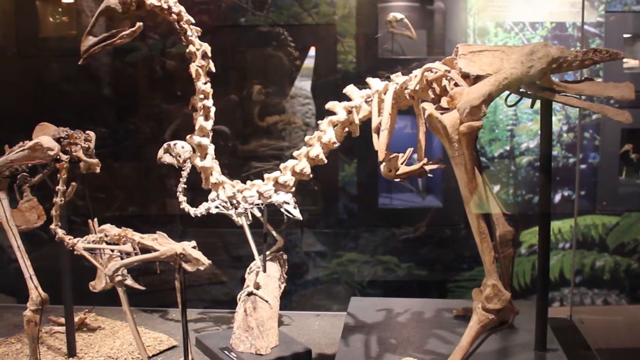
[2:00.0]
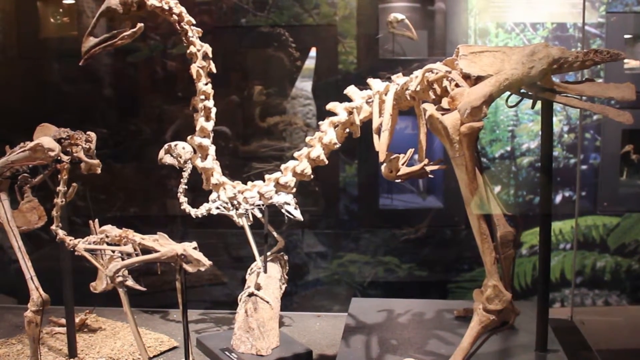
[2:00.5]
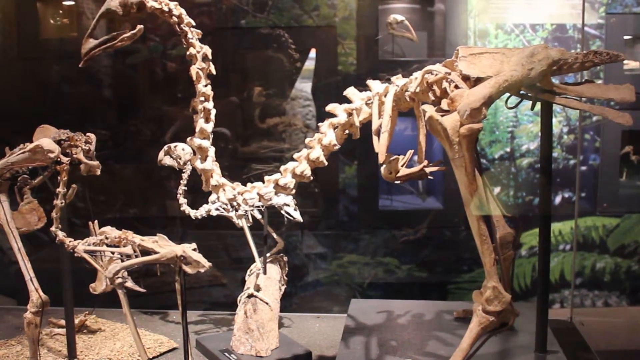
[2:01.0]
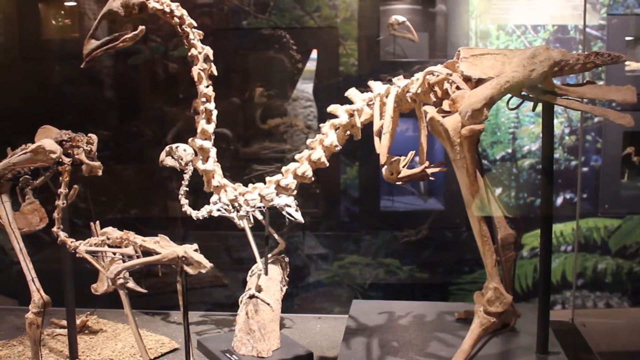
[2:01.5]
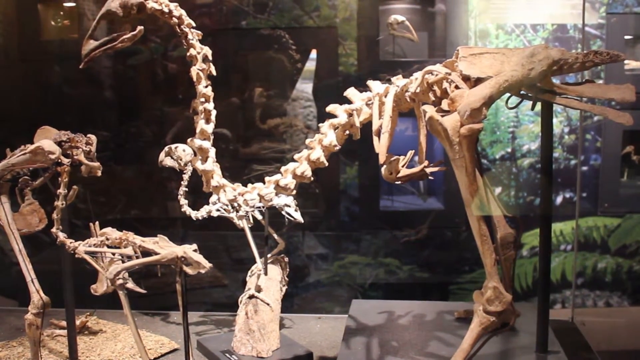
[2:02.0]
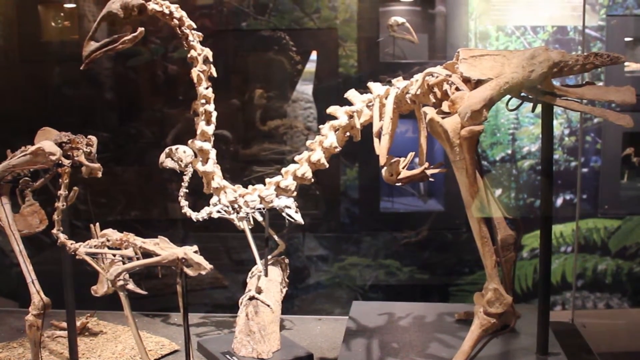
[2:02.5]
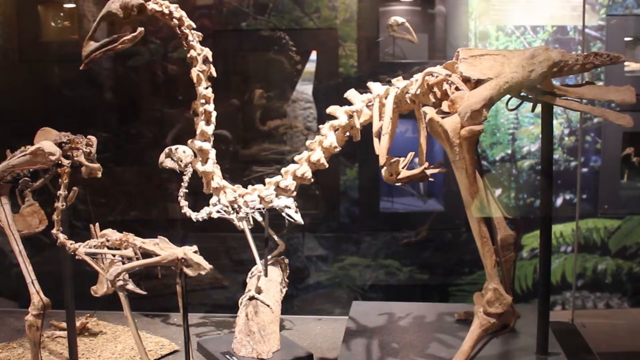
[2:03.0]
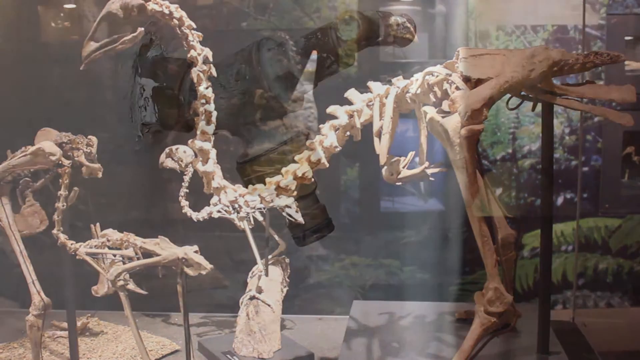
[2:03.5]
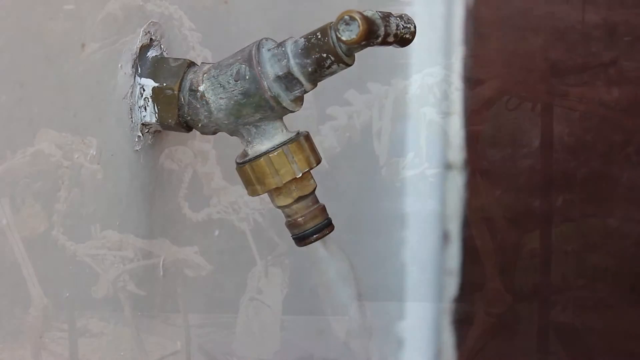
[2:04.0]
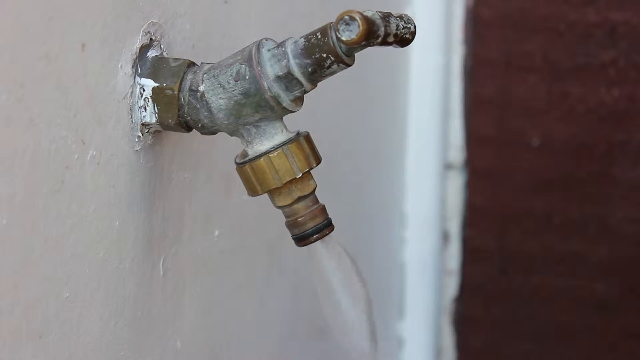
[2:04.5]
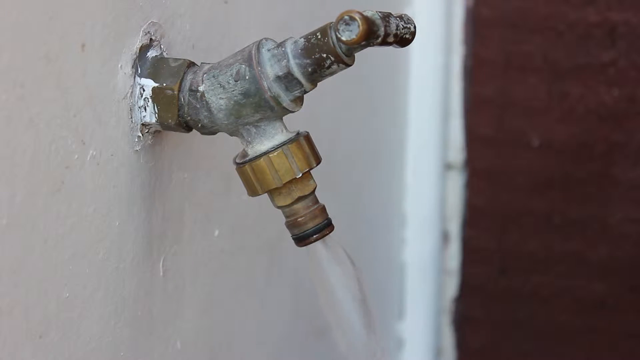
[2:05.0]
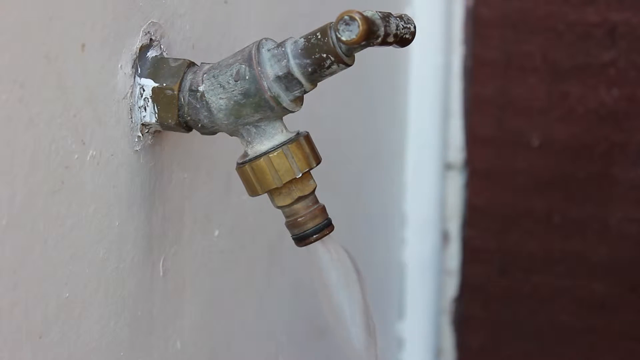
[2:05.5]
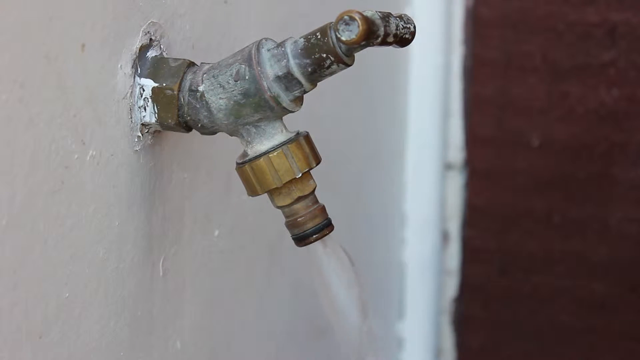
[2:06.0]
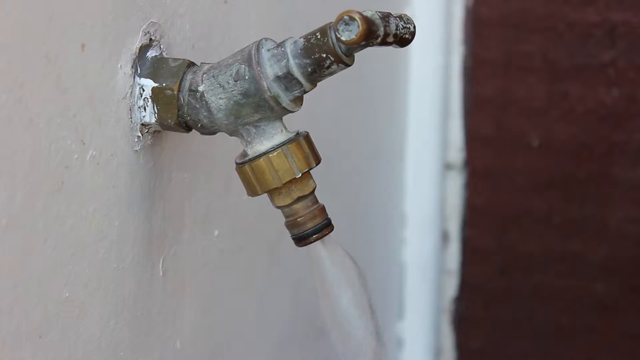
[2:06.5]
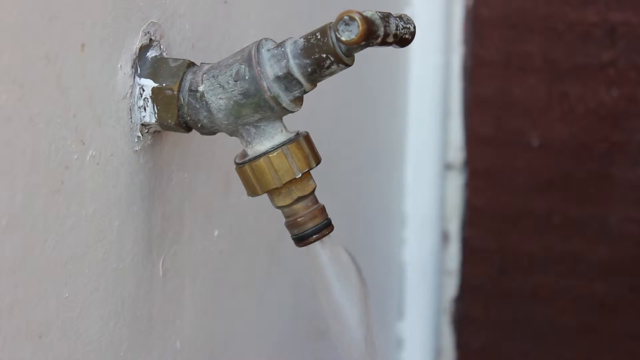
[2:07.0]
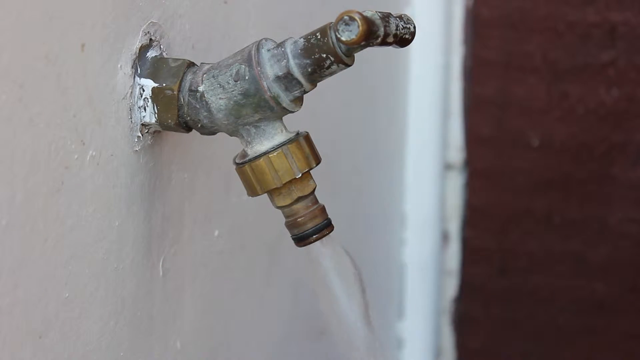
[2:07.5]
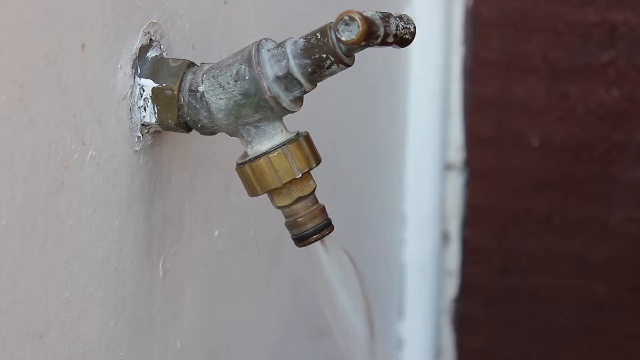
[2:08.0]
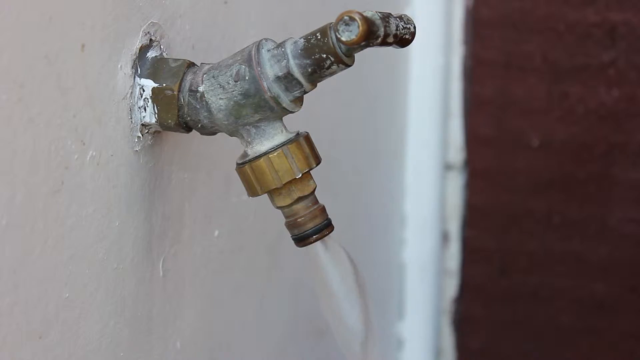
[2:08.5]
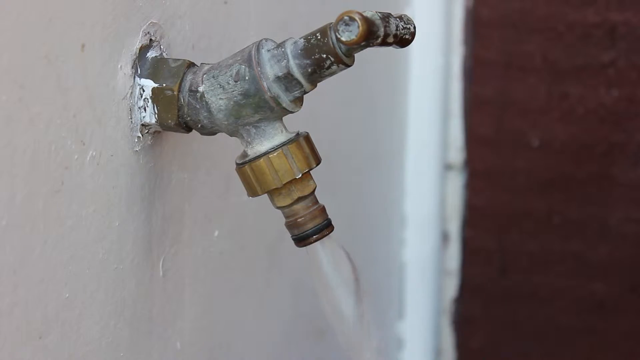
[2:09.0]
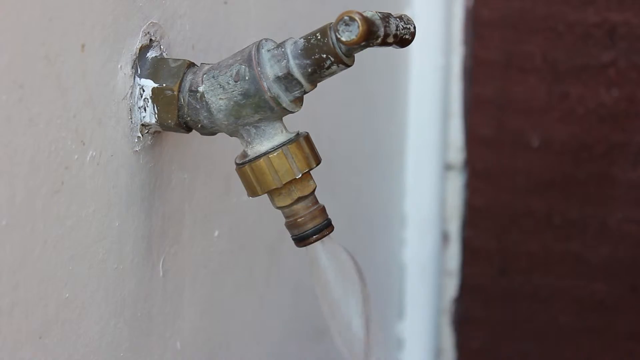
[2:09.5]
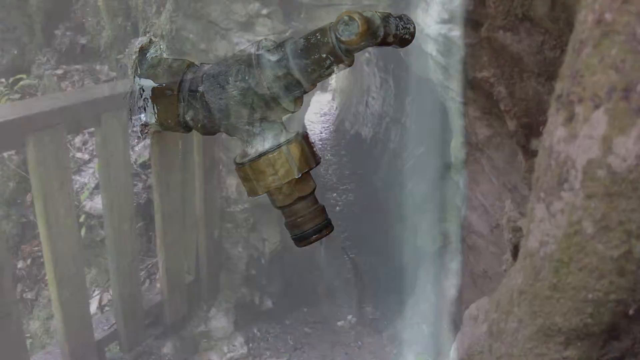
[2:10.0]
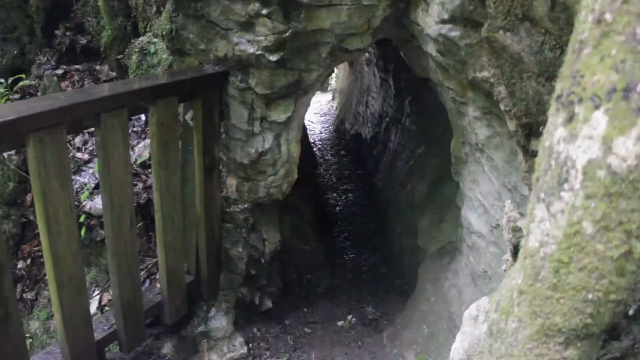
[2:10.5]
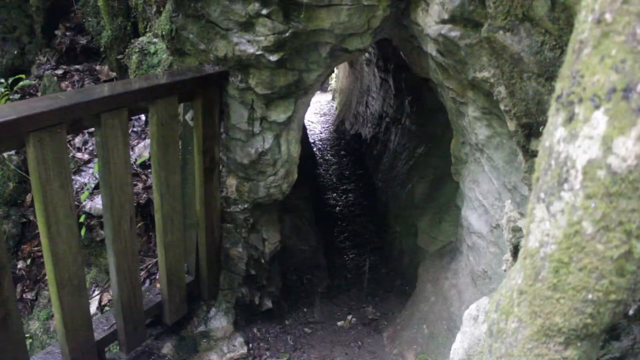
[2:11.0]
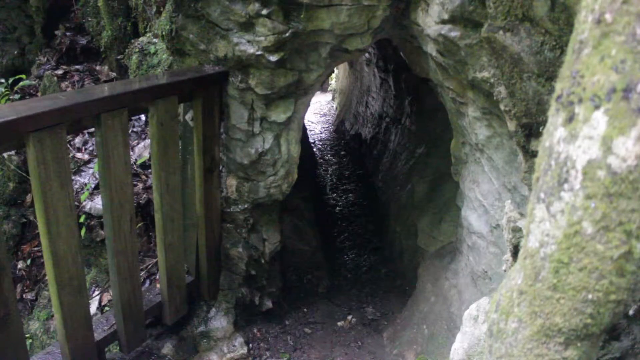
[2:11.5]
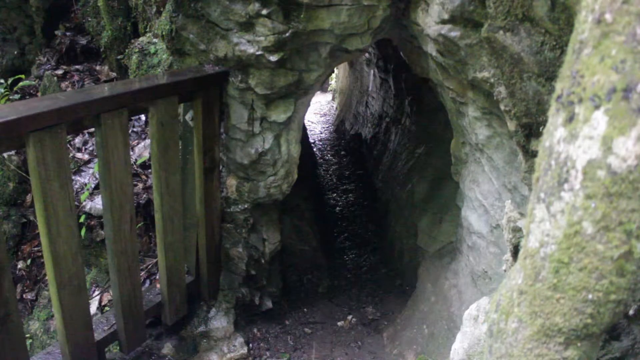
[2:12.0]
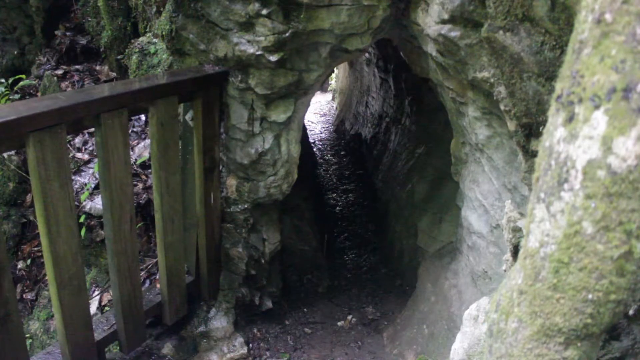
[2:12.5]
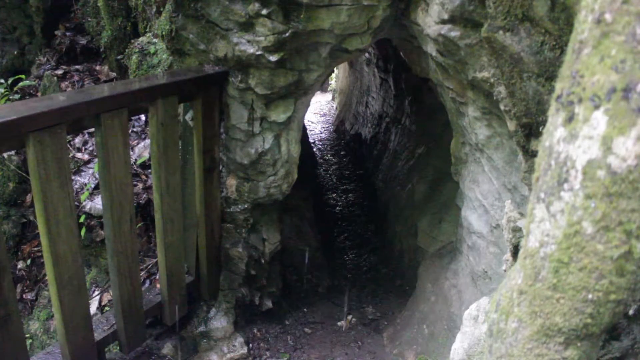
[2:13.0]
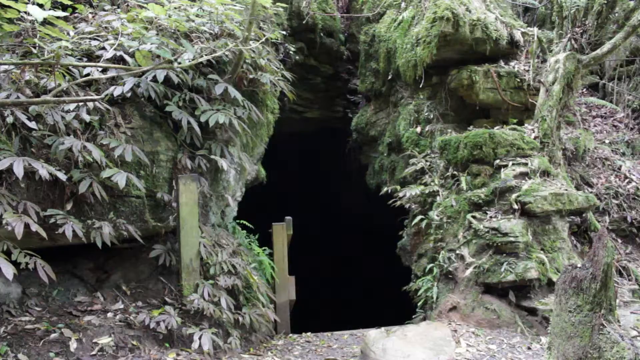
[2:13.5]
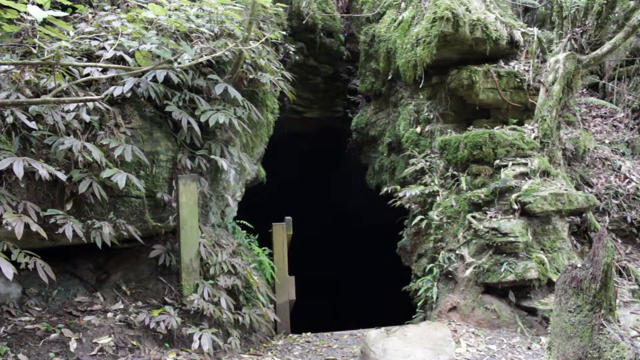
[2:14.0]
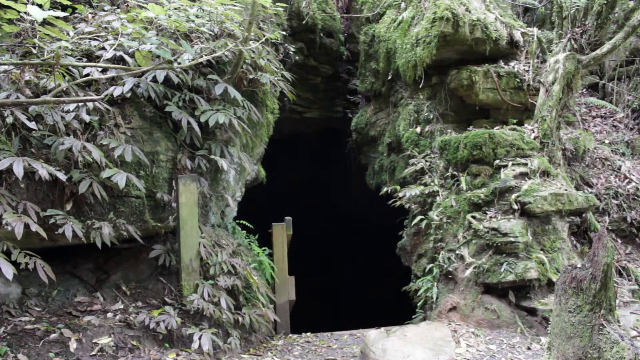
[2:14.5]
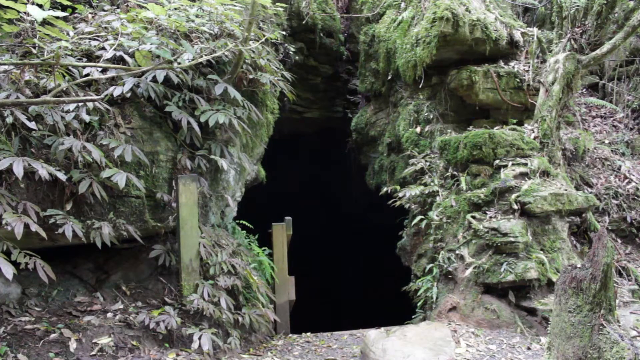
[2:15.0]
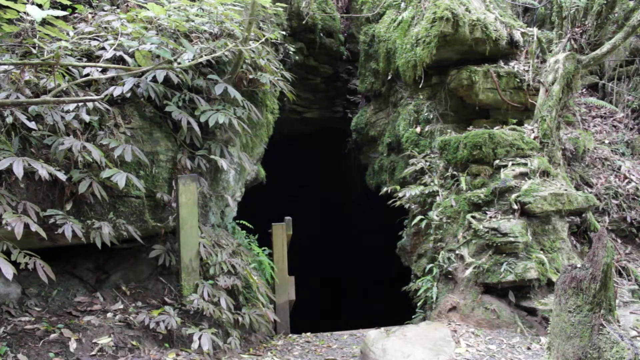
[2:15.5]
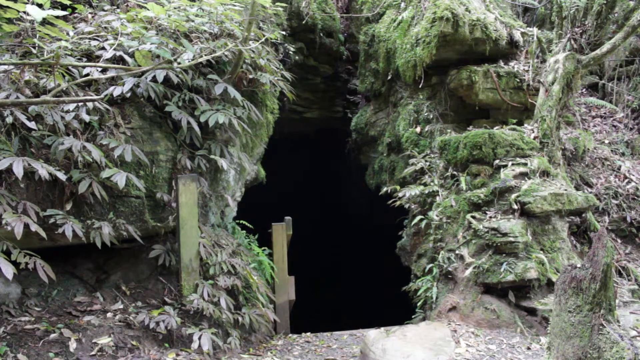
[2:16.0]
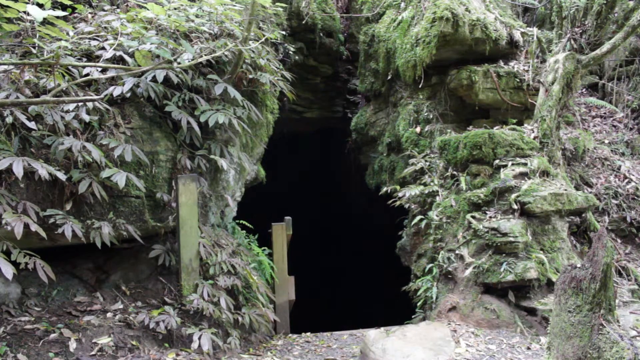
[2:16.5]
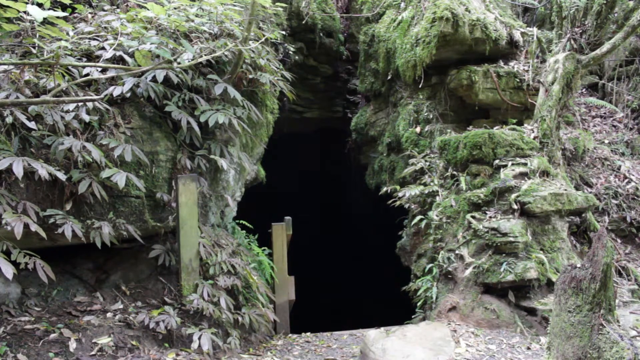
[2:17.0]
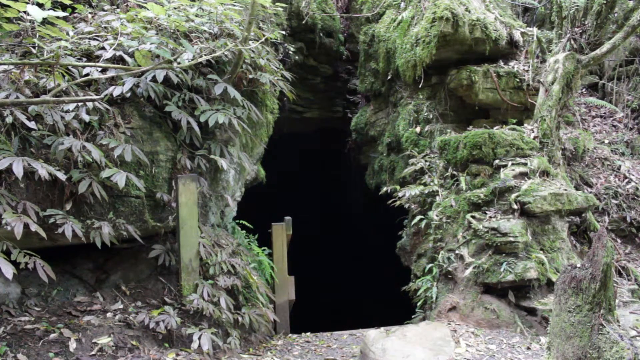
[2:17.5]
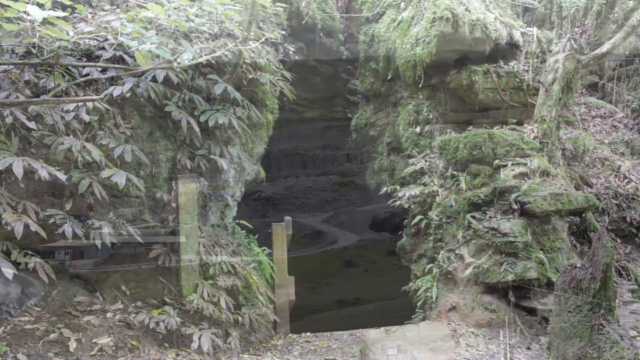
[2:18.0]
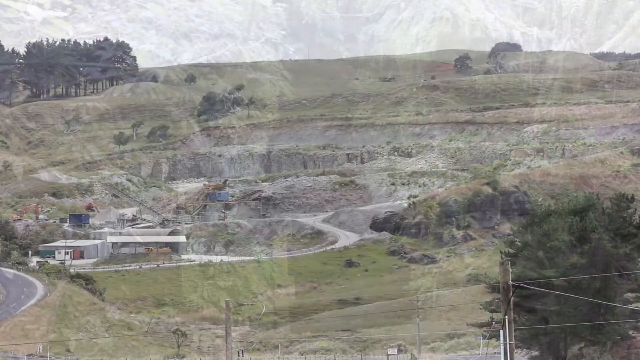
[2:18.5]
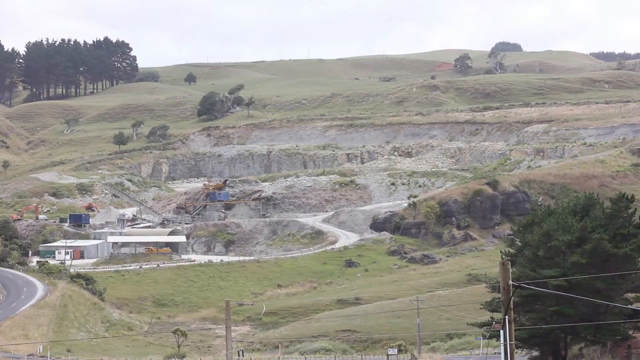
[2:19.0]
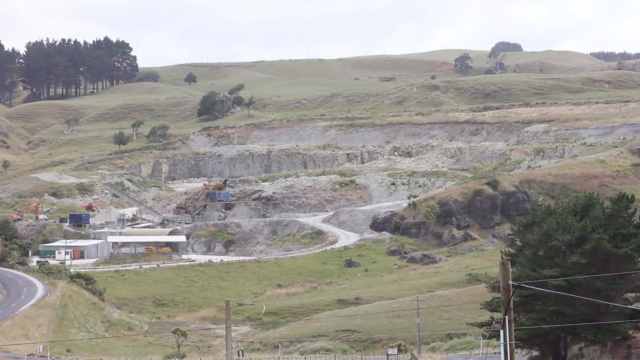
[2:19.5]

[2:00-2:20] A dinosaur statue or some sort of prehistoric-looking bird ancestor, perhaps an ancestor of the ostrich, is shown. It is bird-shaped, with two large legs supporting its body, two arms close to its legs, and a short hindquarters and tail area. Unlike an ostrich, the spine and neck bones seem slightly longer and stretch forward more, so it looks like an ostrich with about double the neck length. A smaller fossil skeleton is beside it, perhaps a baby version, and what appears to be an incomplete one is to the left of both, with the head sort of missing and the body more mangled-looking. The view then switches to a faucet on a white wall pouring water out; it looks like it could be used for a hose.